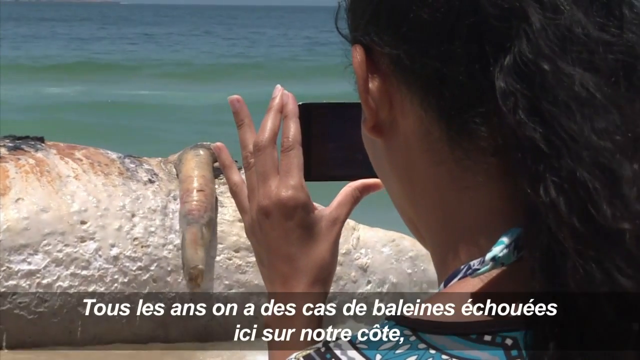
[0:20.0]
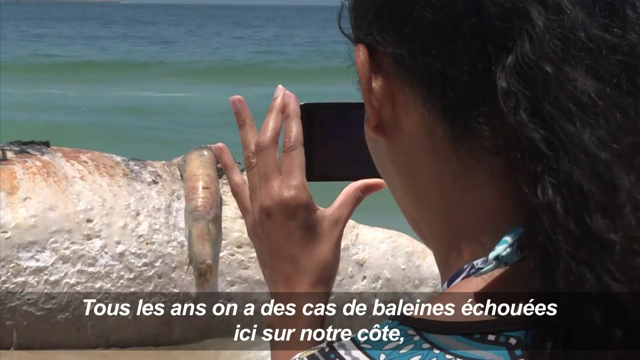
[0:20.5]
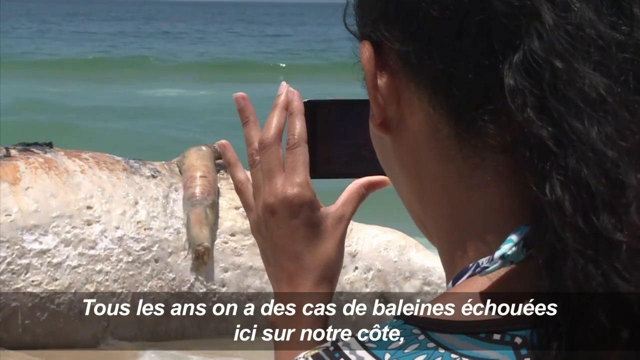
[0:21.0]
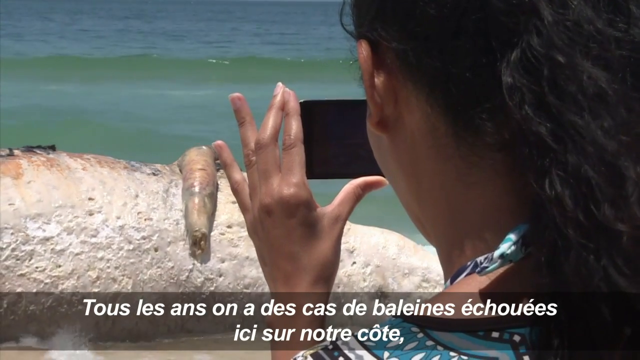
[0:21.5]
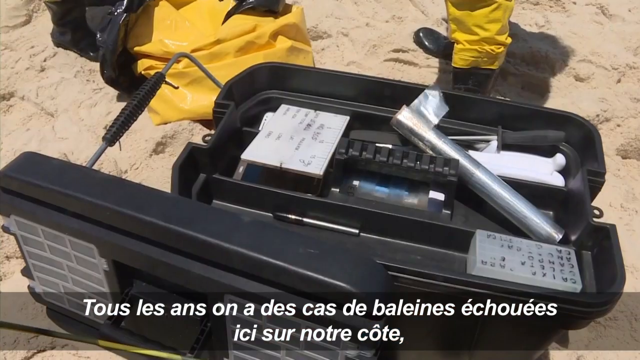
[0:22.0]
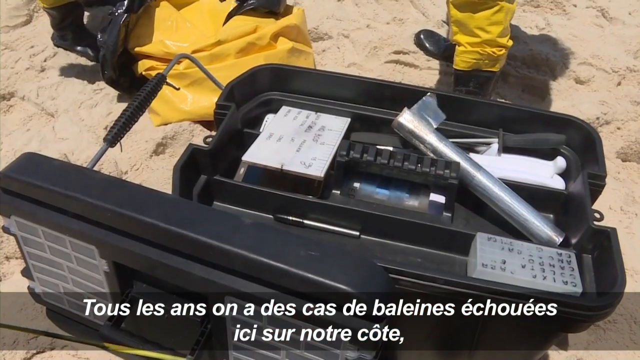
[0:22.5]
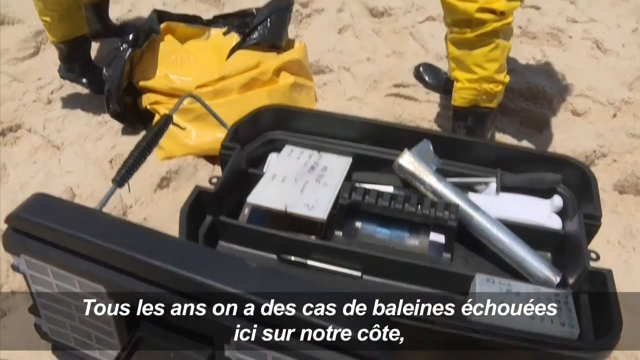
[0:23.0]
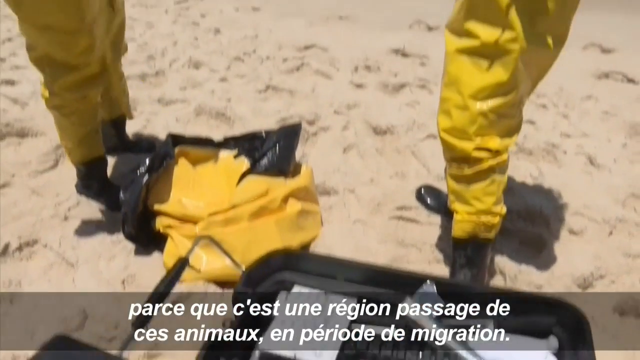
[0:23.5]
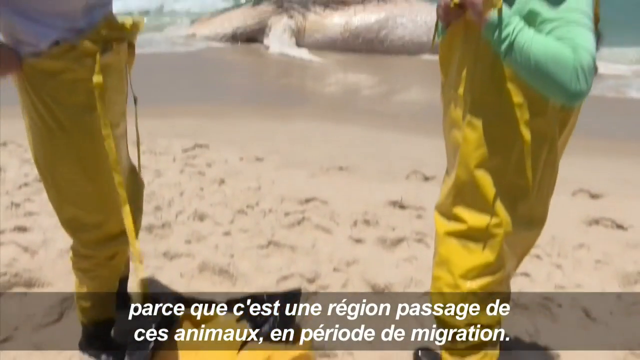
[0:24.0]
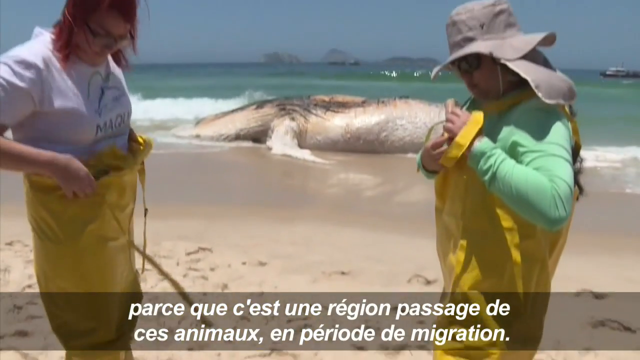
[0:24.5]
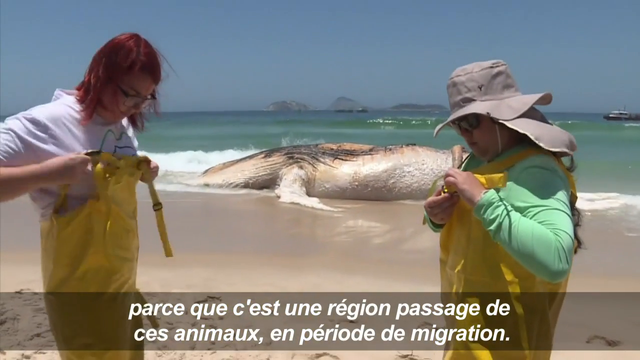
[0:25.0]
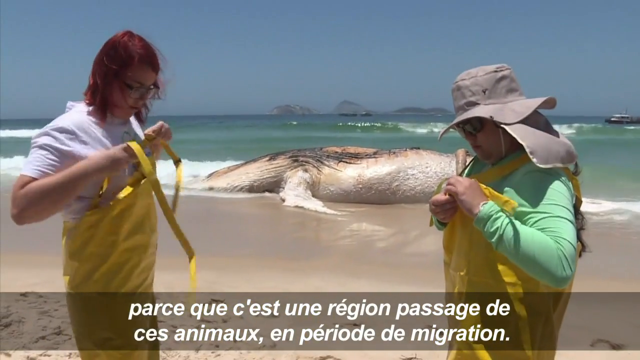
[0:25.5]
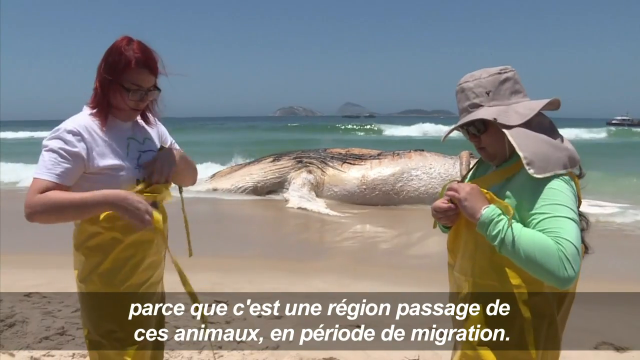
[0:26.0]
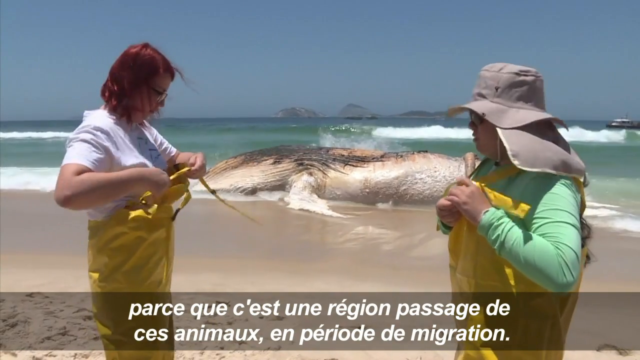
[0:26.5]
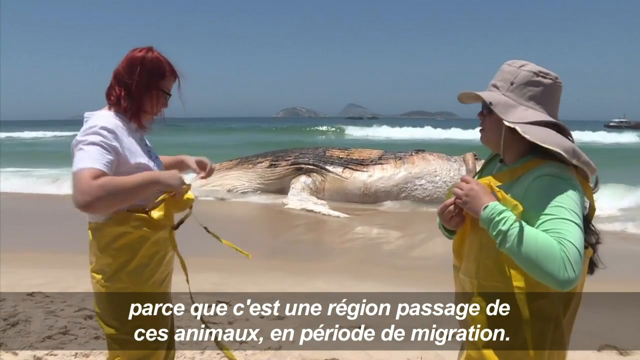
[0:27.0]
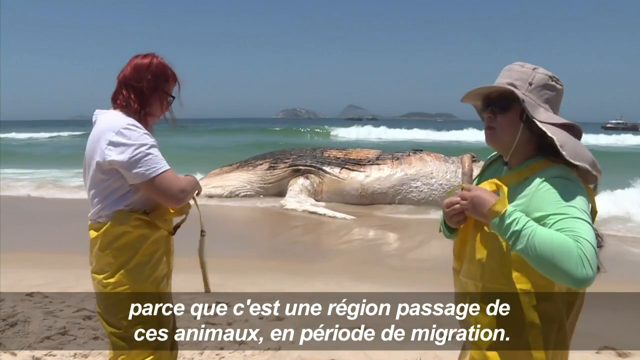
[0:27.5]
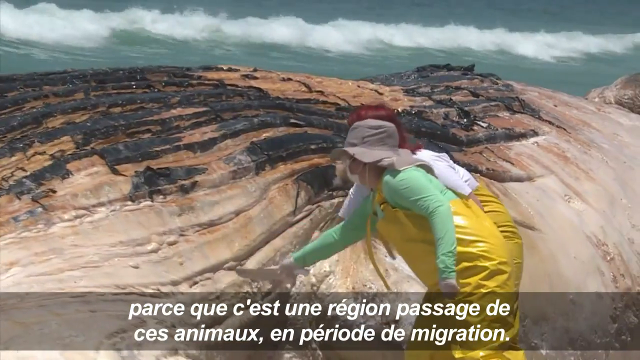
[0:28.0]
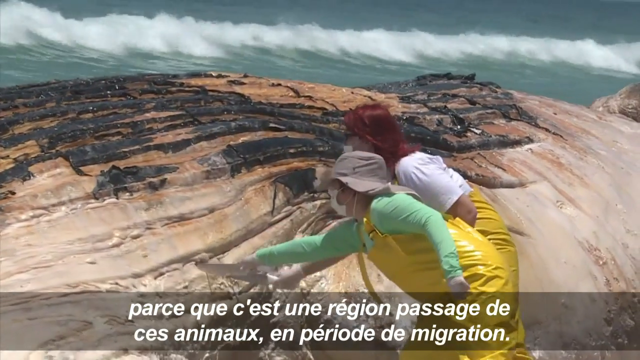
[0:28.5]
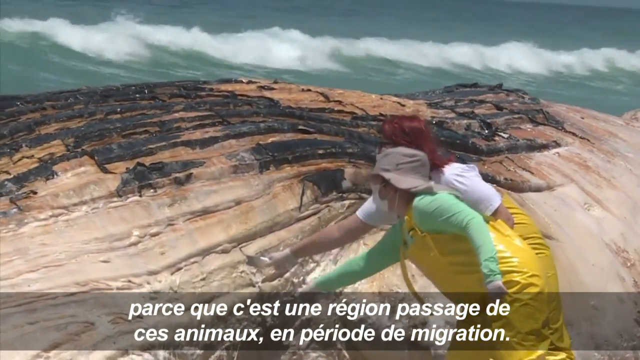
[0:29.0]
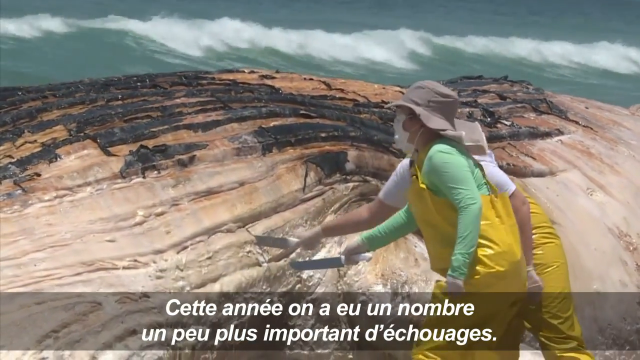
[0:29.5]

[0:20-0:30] What seems to be a humpback whale is washed up along the shore of a beach. A woman with long black hair is taking a picture of the whale. A black toolbox is on the ground, and two women, one of them tall, stand wearing yellow waders as they fix their clothing, right in front of the humpback whale. The two women then hold two long knives and start chopping into the whale's body. The whale is just sitting there on the beach; it is mostly white but has some black spots along its torso.